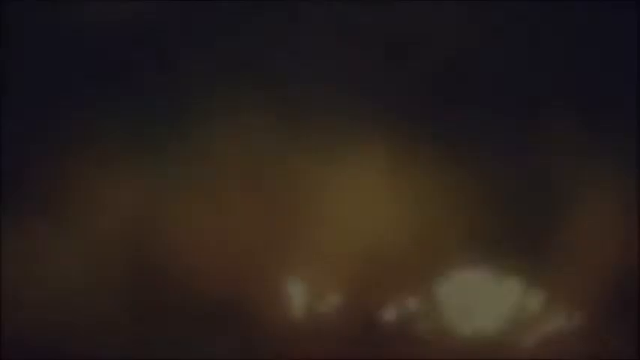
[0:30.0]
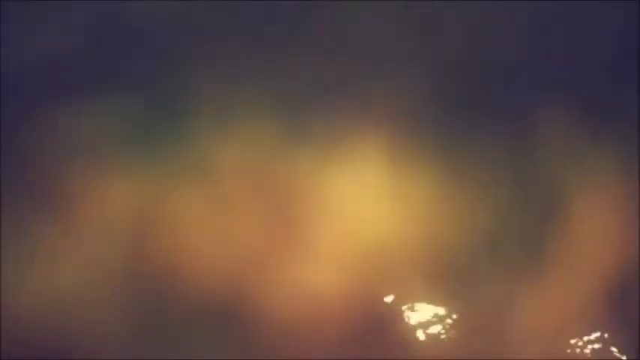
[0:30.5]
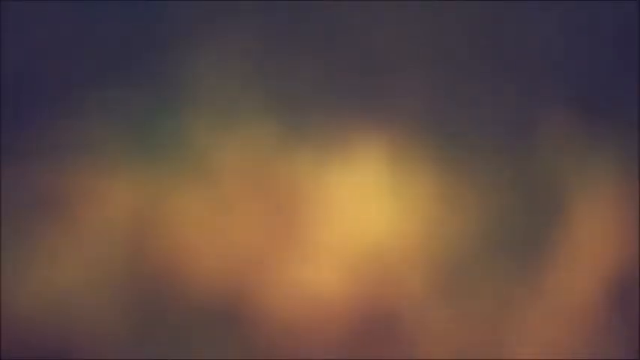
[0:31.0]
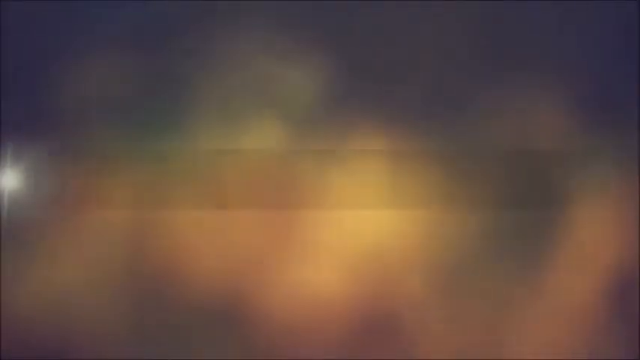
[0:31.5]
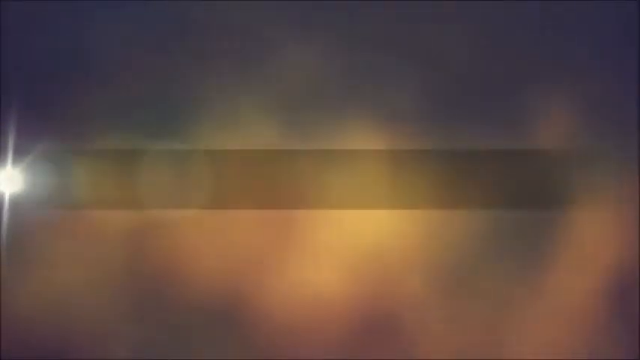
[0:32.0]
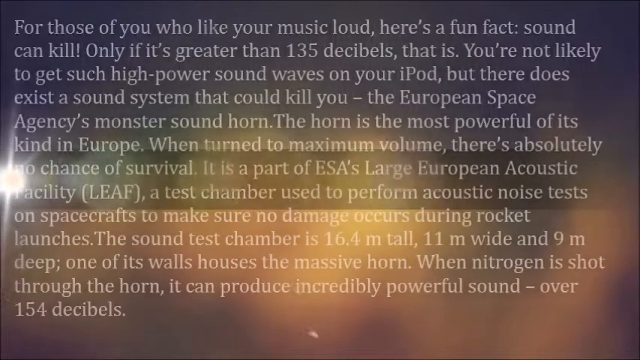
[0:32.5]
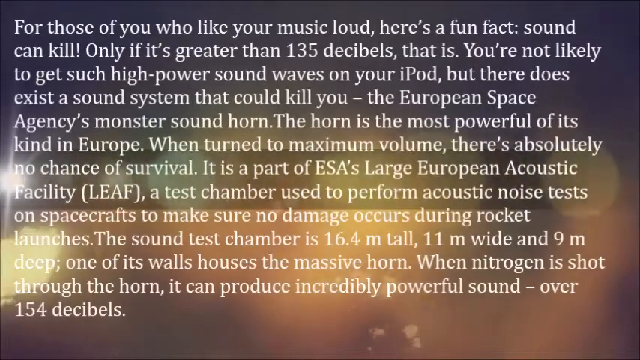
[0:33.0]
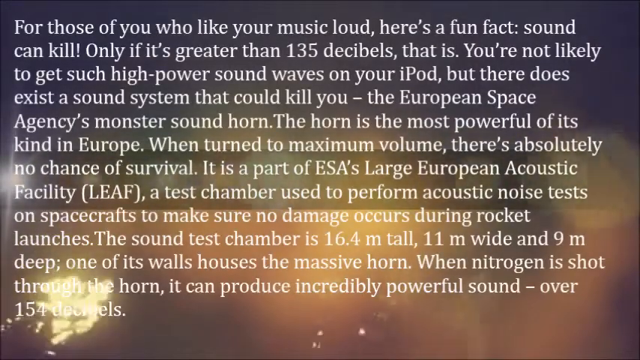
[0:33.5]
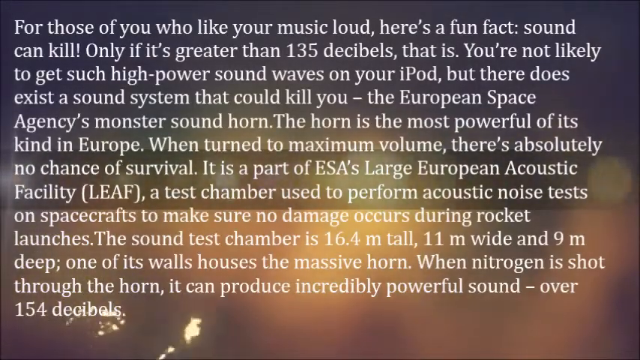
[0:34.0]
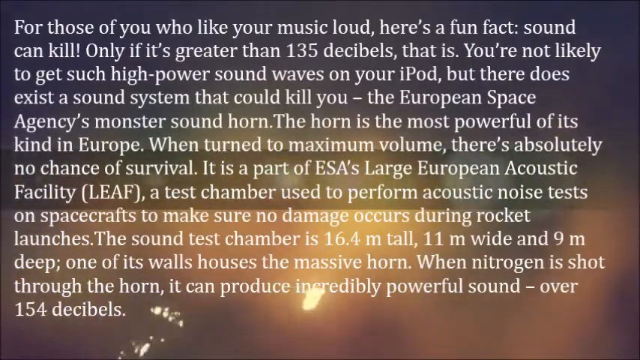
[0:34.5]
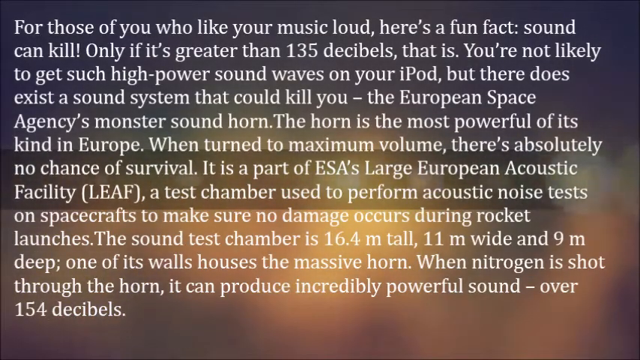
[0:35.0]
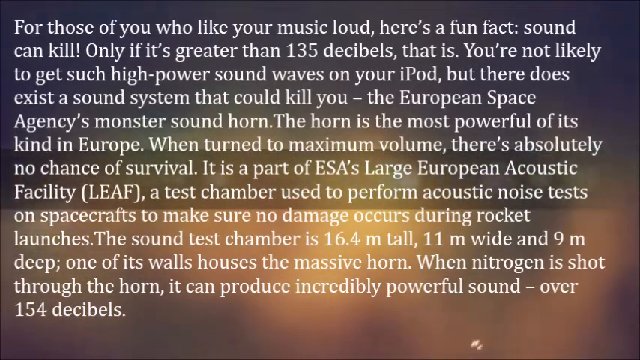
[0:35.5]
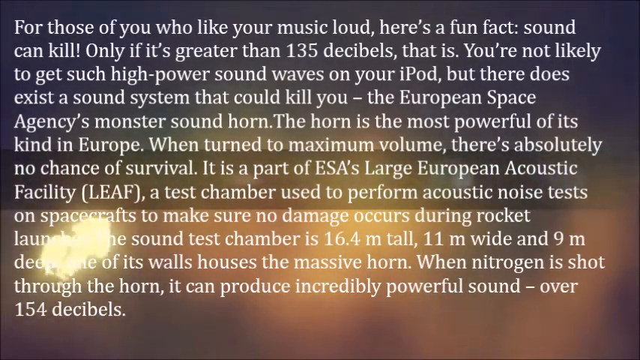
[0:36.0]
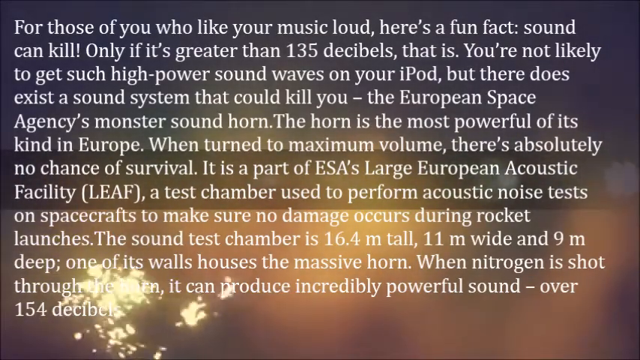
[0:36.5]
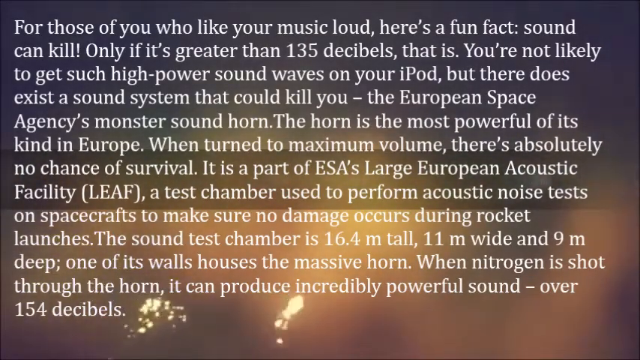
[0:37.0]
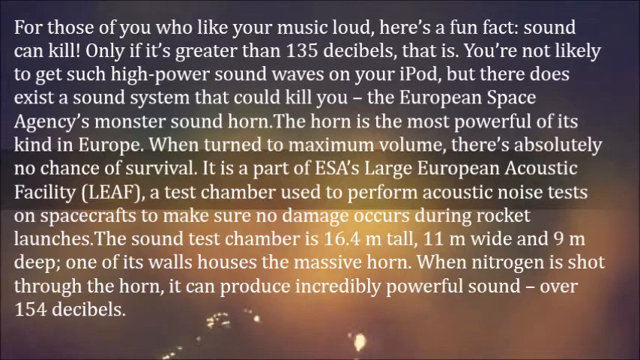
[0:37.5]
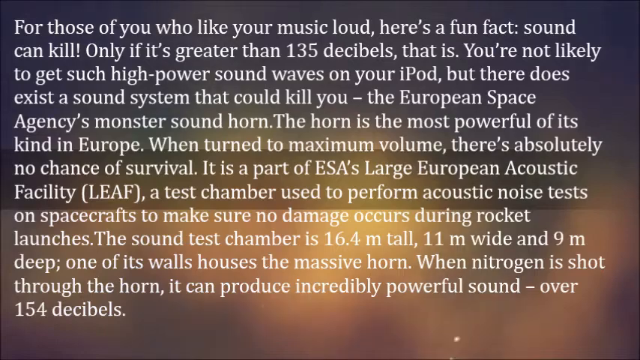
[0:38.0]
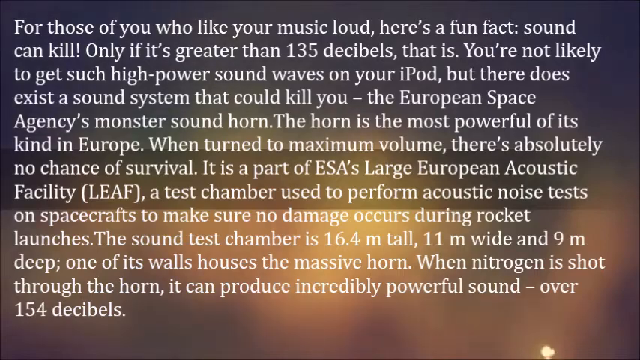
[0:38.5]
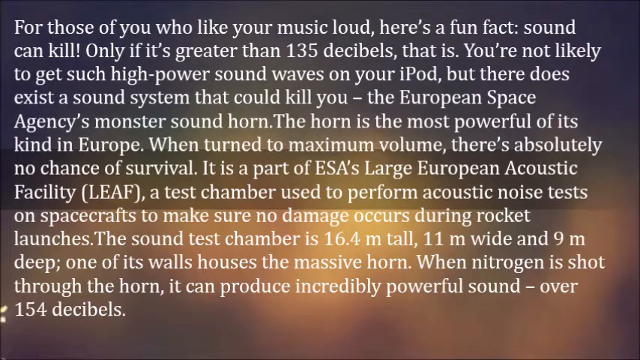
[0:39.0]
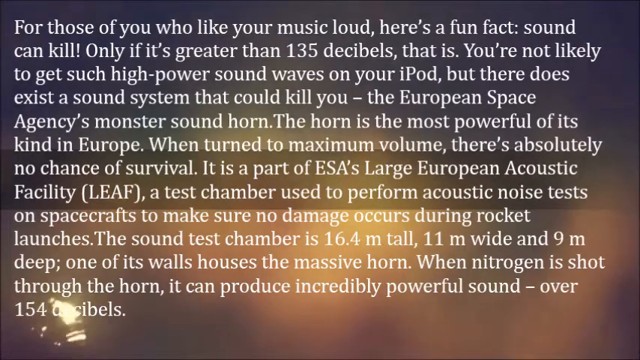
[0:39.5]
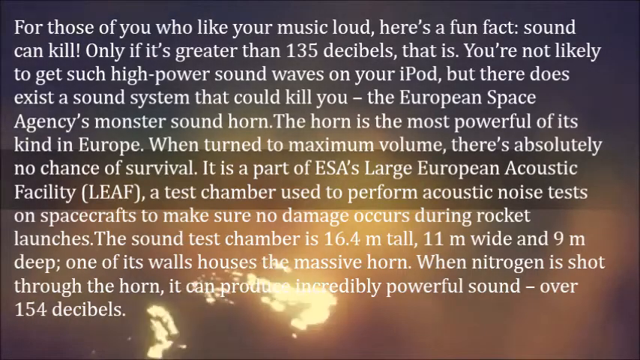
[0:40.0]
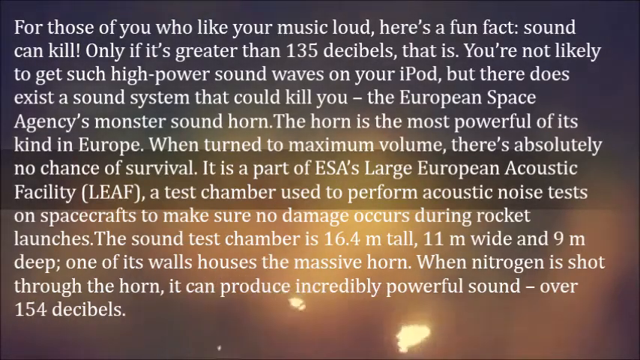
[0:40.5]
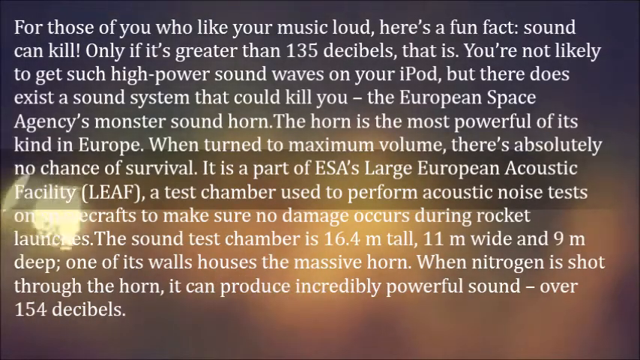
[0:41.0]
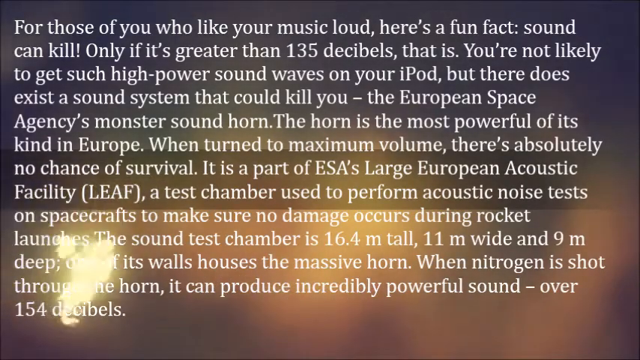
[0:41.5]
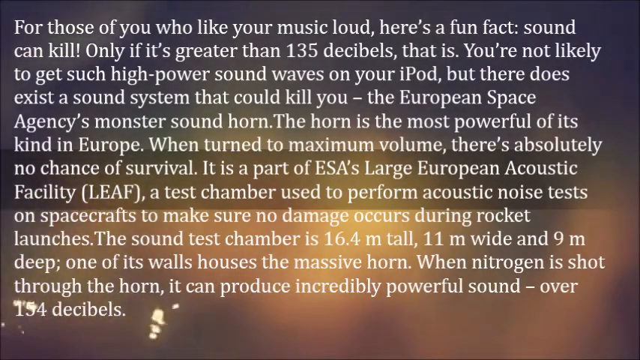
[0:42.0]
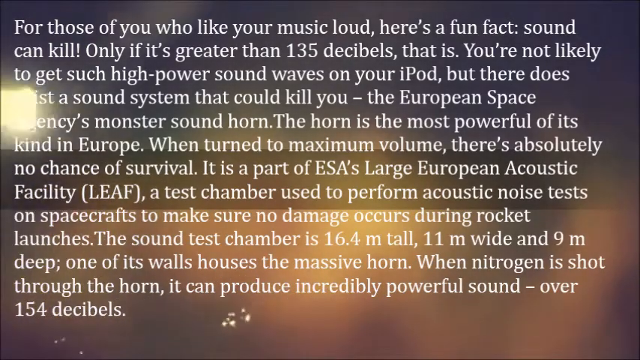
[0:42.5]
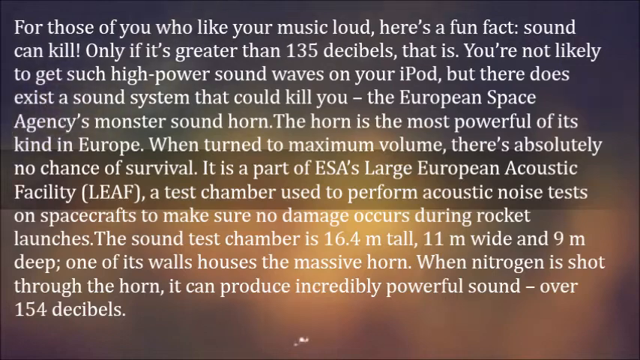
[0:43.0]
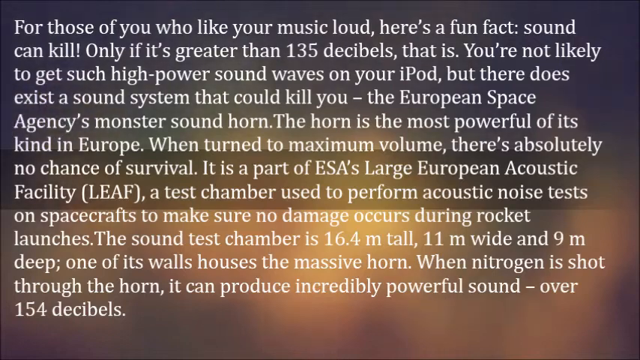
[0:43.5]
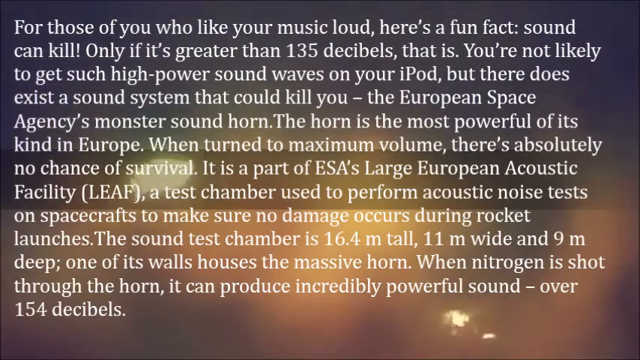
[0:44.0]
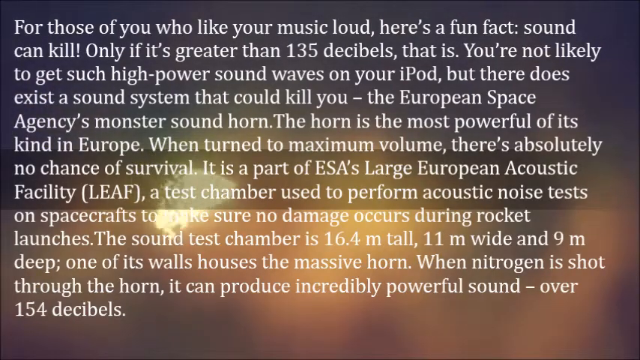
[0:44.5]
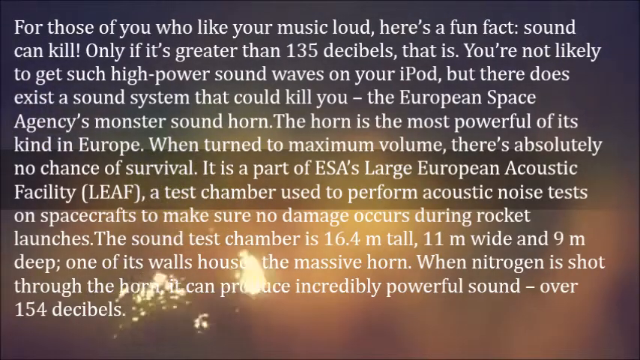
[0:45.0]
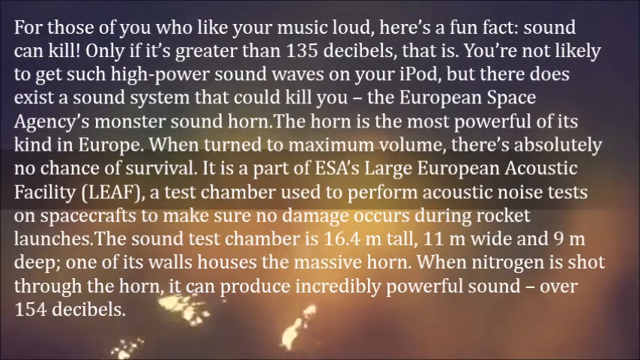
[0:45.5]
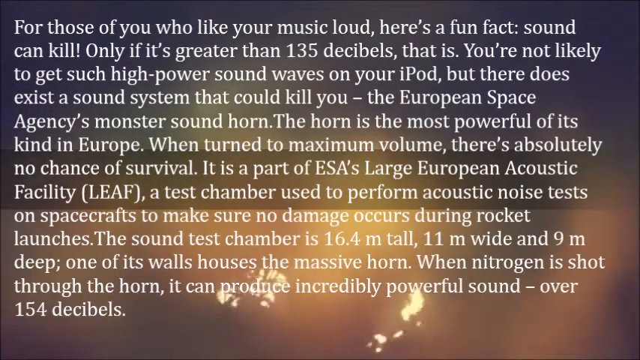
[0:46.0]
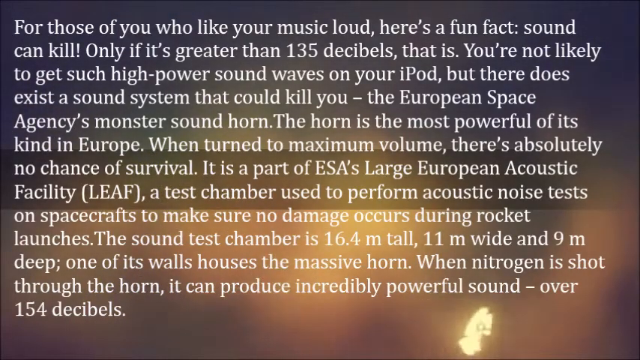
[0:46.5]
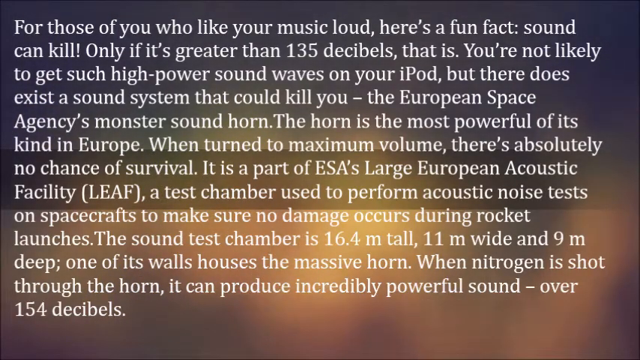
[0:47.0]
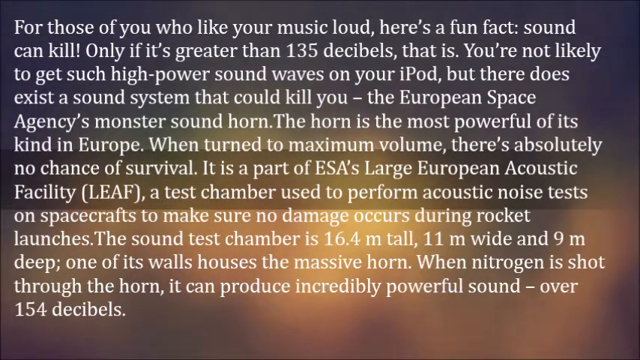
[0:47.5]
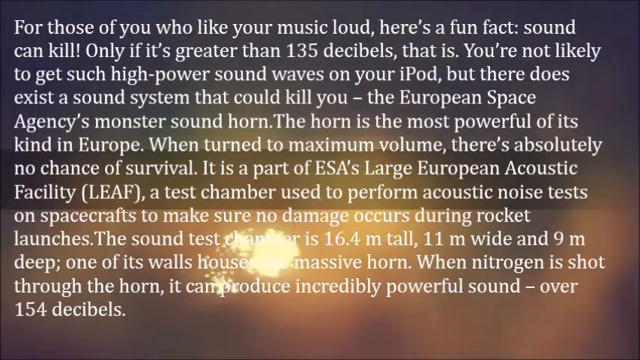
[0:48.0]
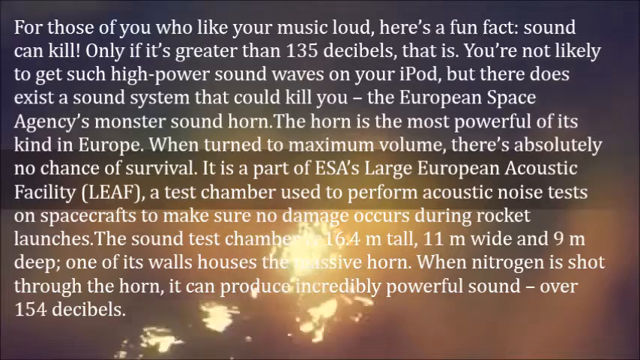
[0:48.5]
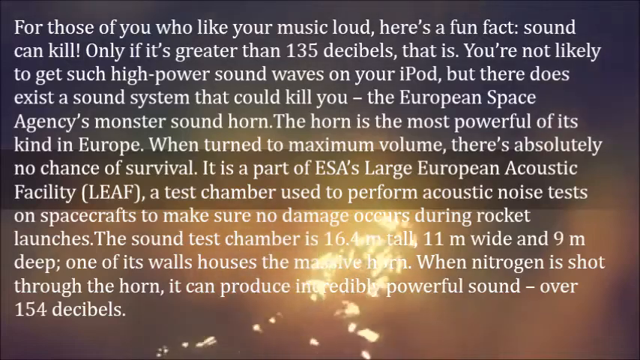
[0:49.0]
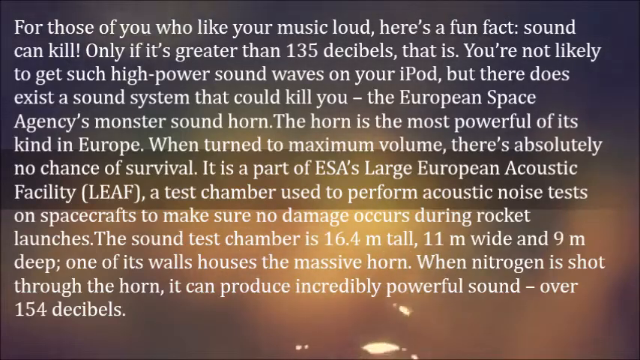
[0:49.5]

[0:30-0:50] Text on screen reads: "For those of you who like your music loud, here is a fun fact: sound can kill only if it's greater than 135 decibels. That is, you're not likely to get such high power sound waves on your iPod. But there does exist a sound system that could kill you: the European Space Agency's monster sound horn. The horn is the most powerful of its kind in Europe. When turned to maximum volume, there's absolutely no chance of survival. It is part of ESA's Large European Acoustic Facility, a test chamber used to perform acoustic noise tests on spacecrafts to make sure no damage occurs during rocket launches. The sound test chamber is 16.4 meters tall, 11 meters wide and 9 meters deep. One of its walls houses the massive horn. When nitrogen is shot through the horn, it can produce incredibly powerful sound of 154 decibels." The background behind the text is moving.